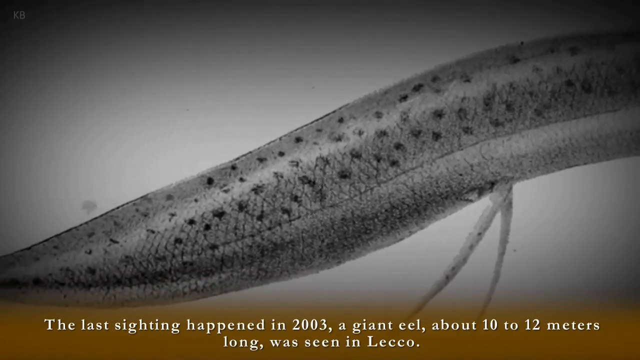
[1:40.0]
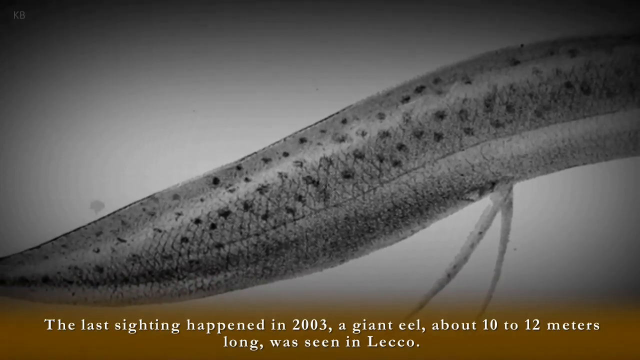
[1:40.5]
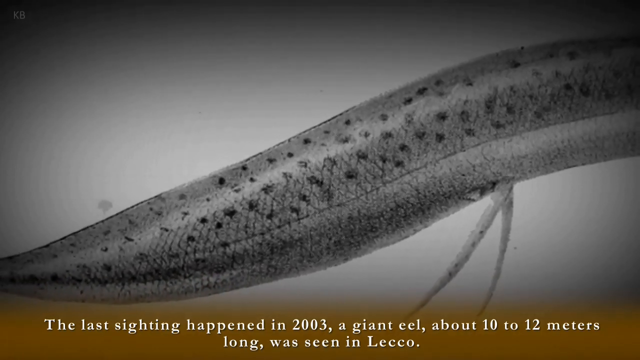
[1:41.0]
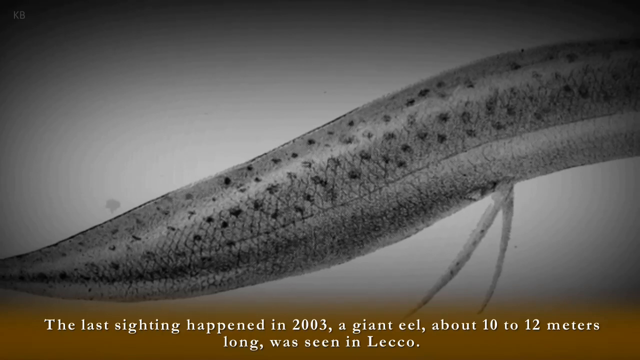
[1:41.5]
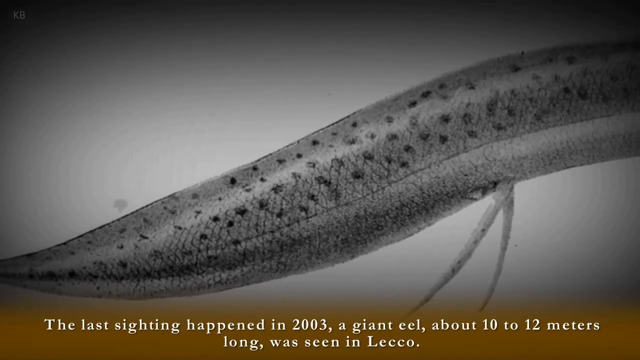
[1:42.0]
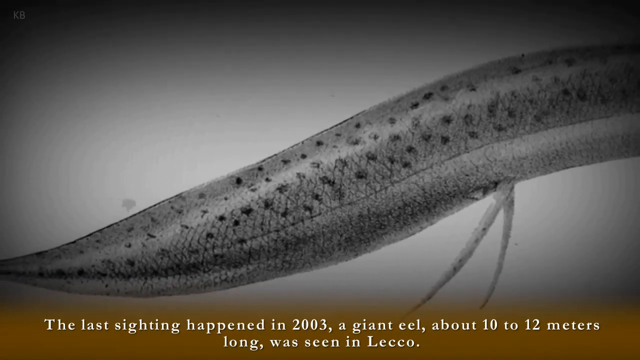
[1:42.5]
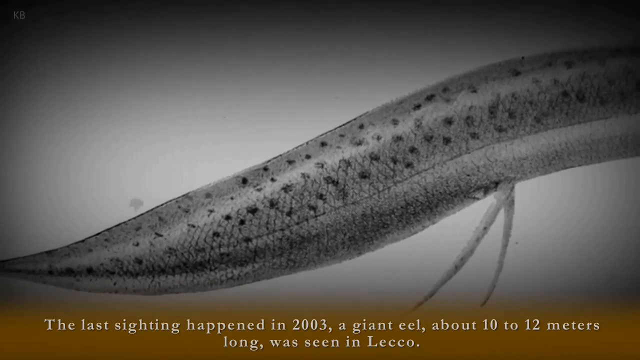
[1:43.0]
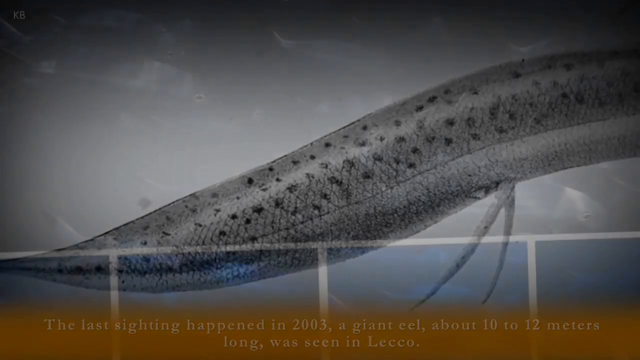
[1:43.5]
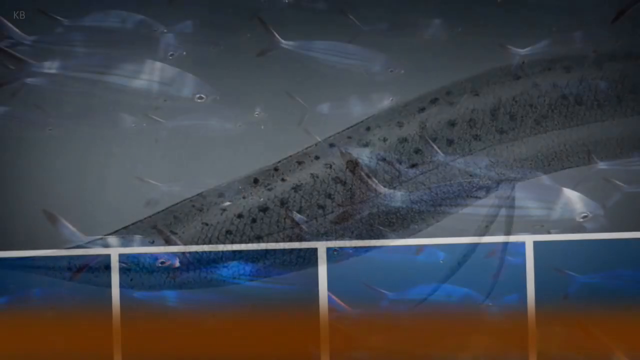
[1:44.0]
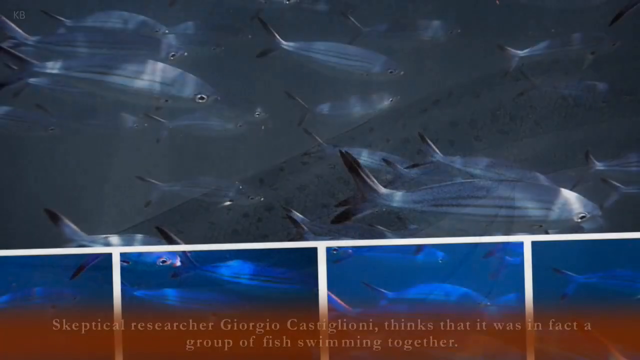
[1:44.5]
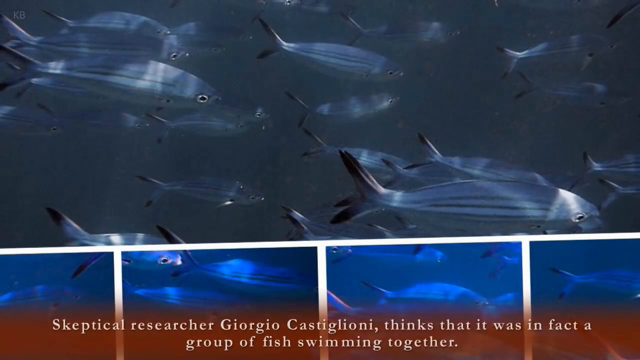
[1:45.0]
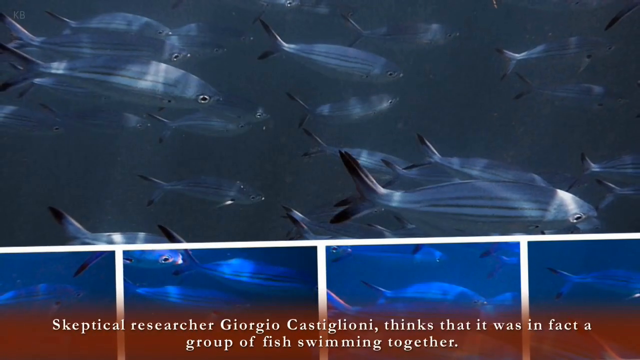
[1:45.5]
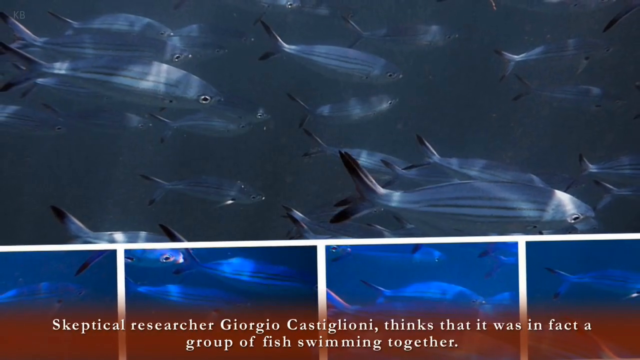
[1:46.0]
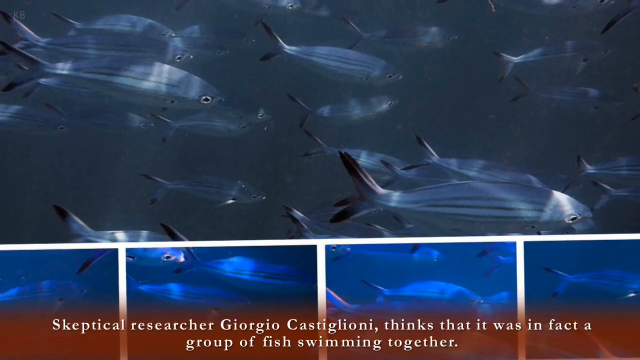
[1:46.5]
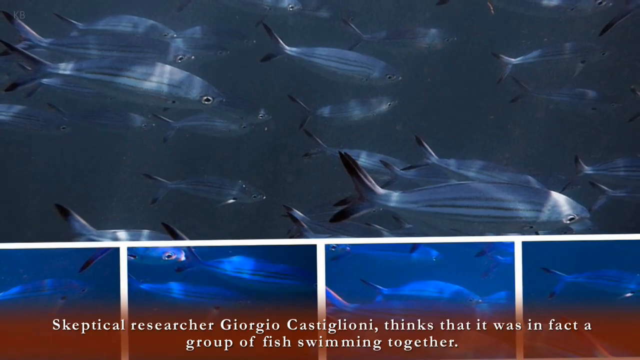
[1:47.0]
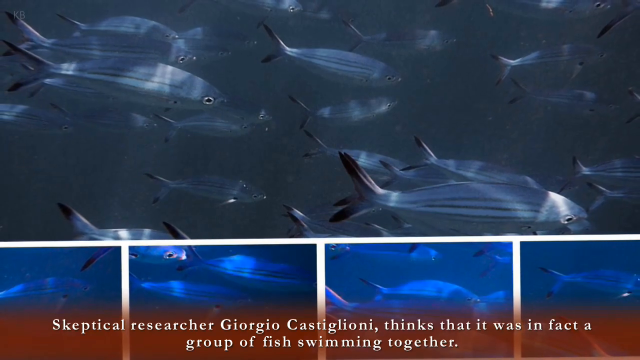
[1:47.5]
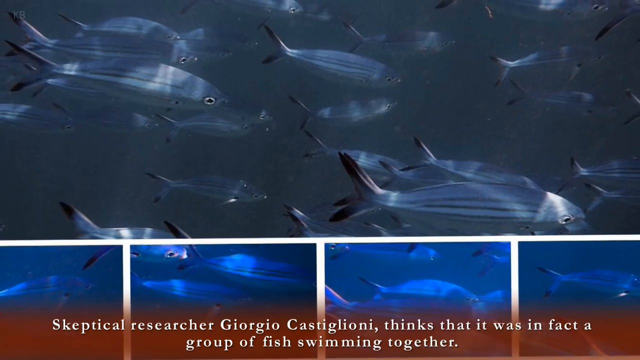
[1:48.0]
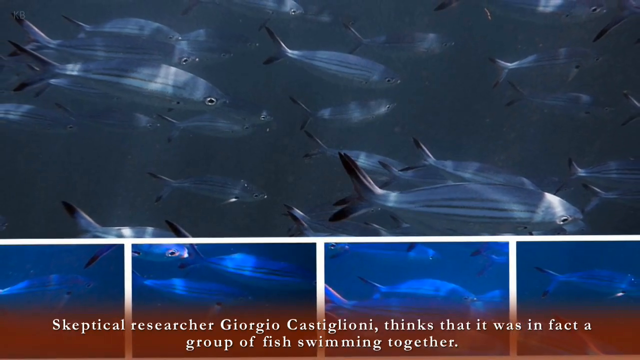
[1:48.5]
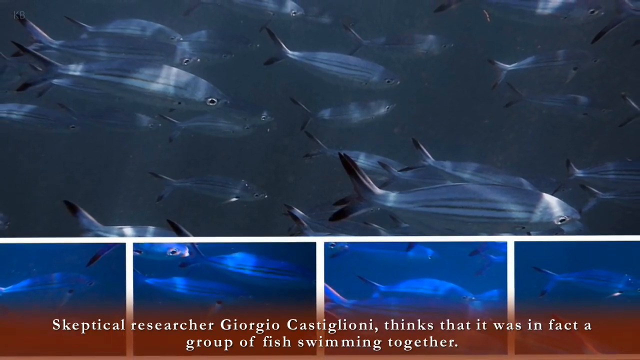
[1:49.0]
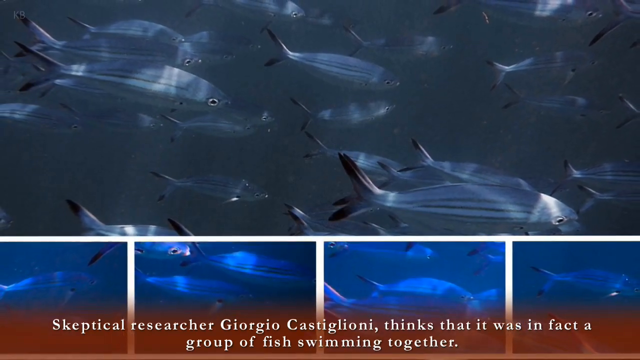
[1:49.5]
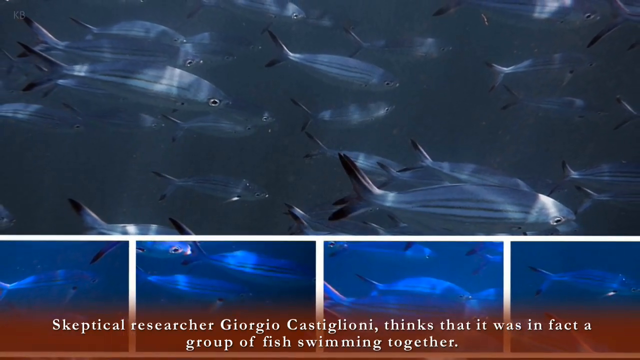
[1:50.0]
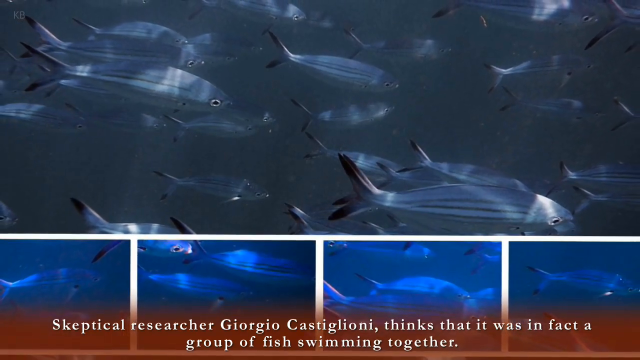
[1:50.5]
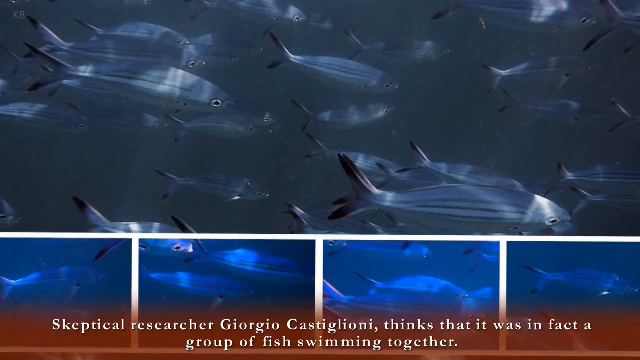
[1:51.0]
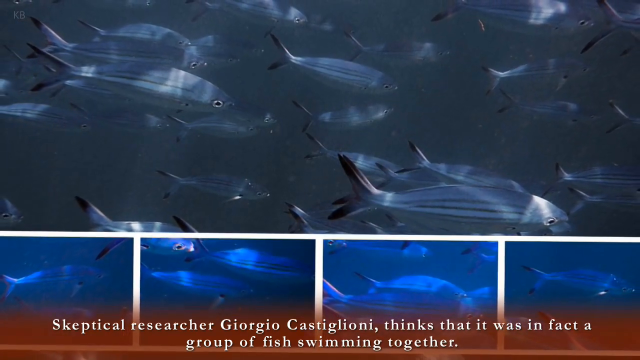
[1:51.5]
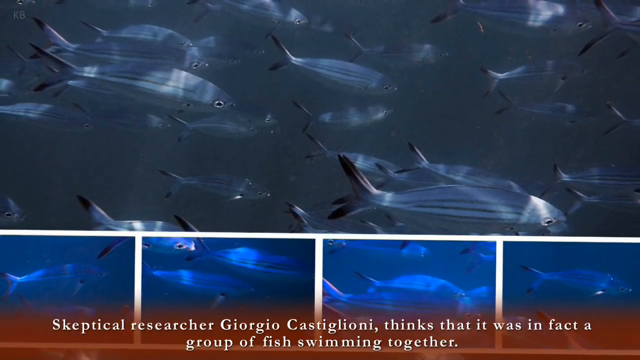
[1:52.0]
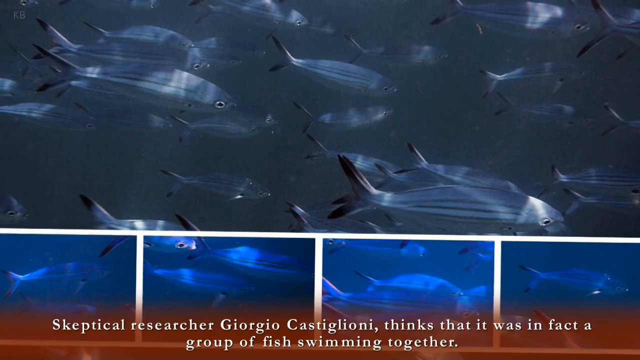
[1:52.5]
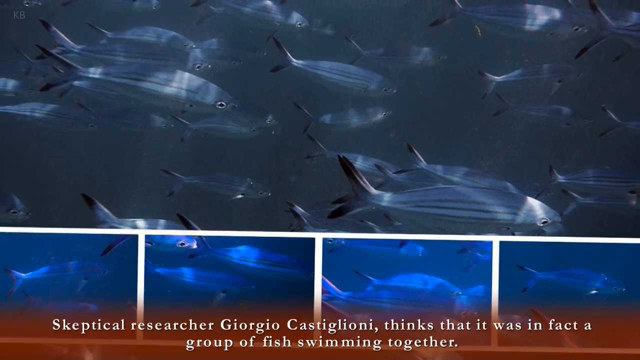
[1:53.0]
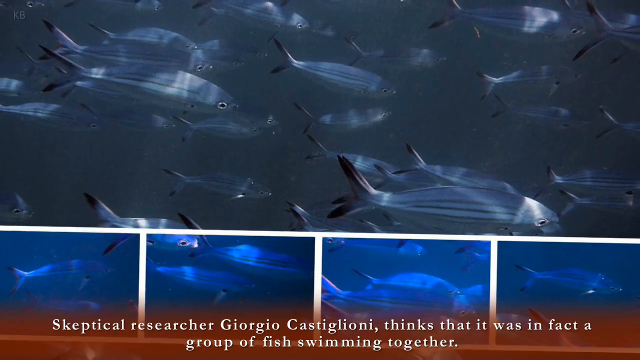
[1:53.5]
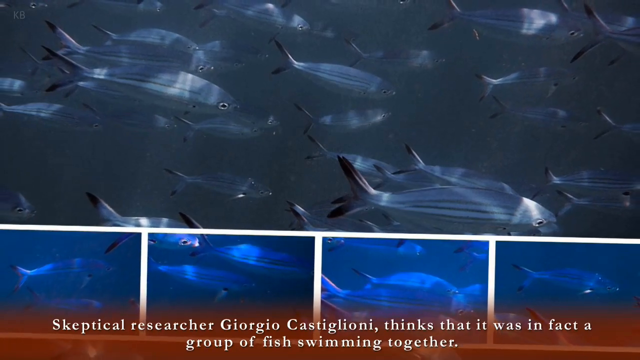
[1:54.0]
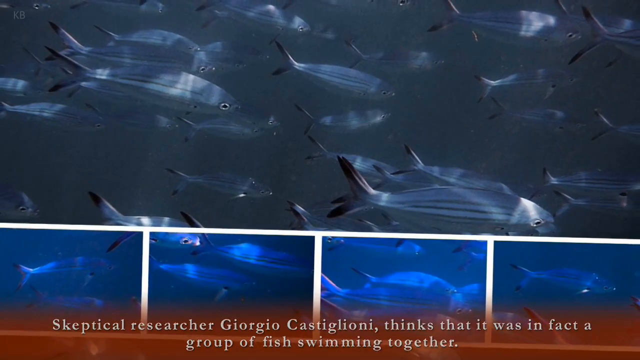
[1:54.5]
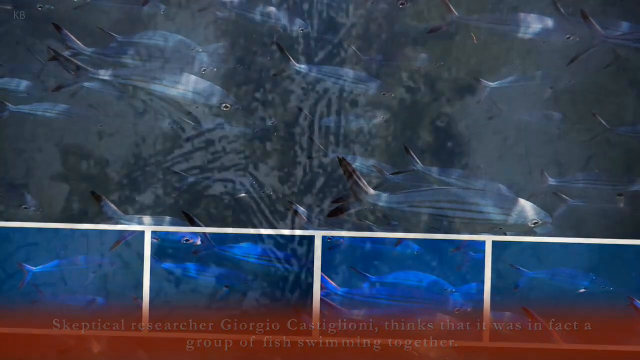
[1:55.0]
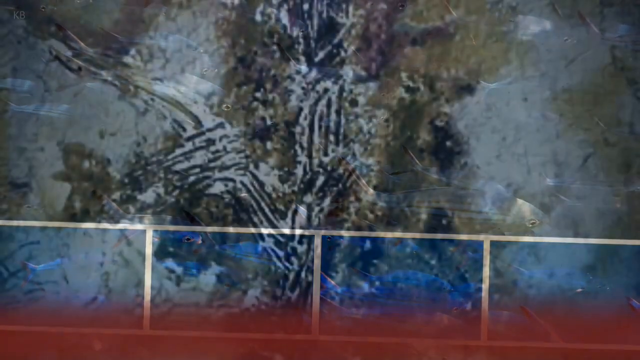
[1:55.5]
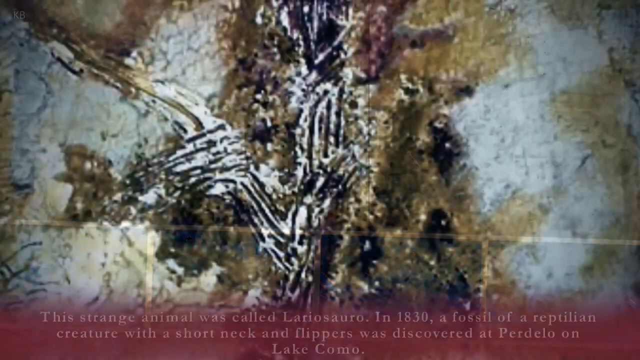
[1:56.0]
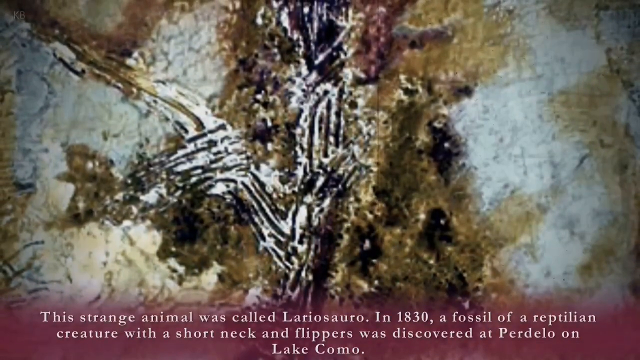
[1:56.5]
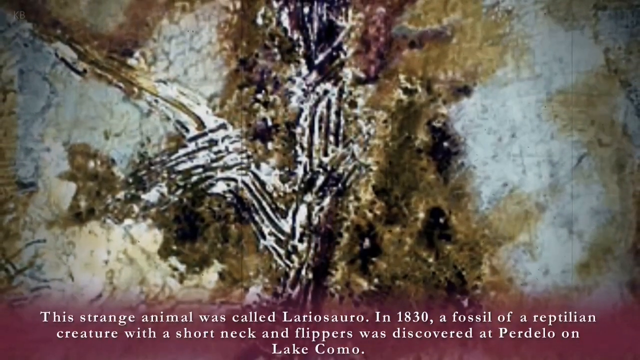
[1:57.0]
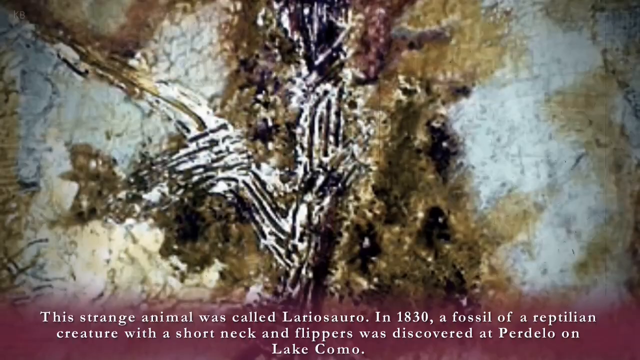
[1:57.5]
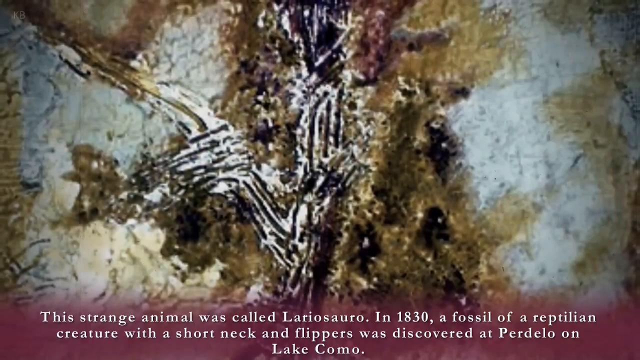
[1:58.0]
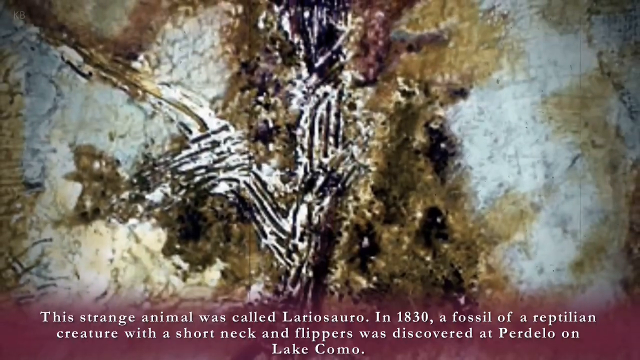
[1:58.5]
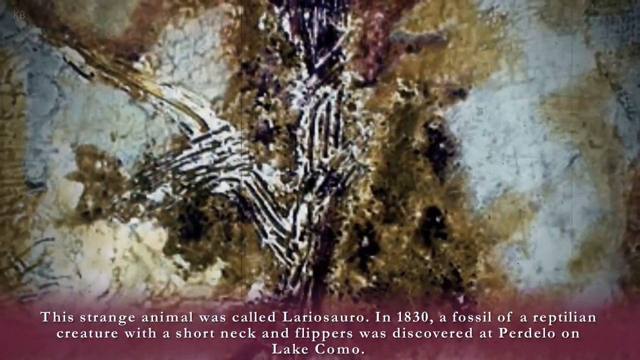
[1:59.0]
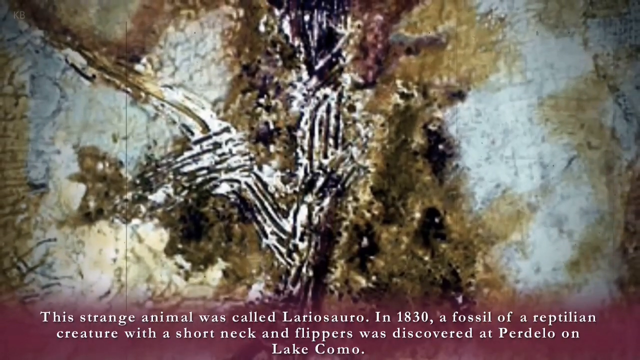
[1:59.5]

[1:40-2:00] Text about the last sighting in 2003 says a skeptical researcher thinks it was in fact a group of fish swimming together. The text also mentions a creature with a short neck and flippers being discovered.